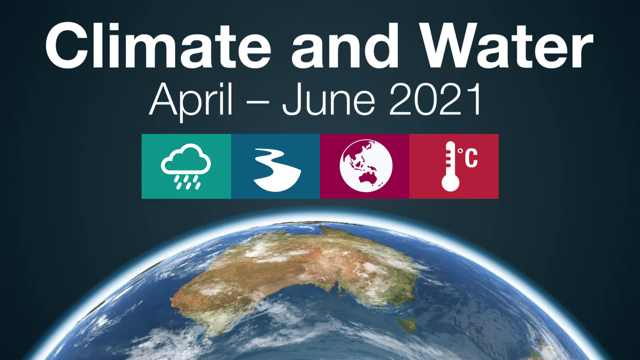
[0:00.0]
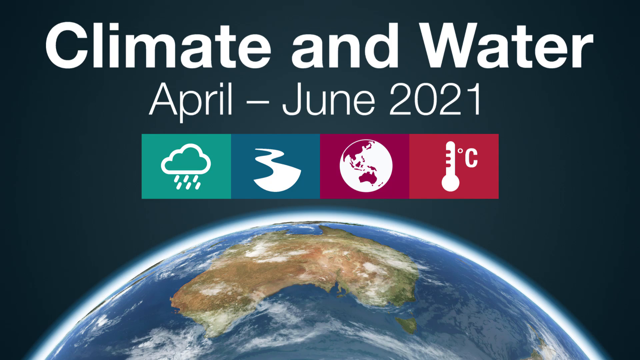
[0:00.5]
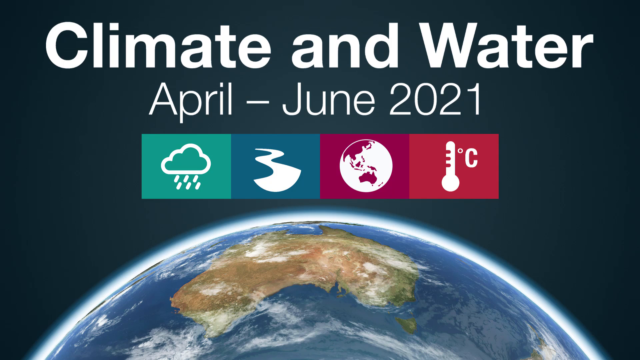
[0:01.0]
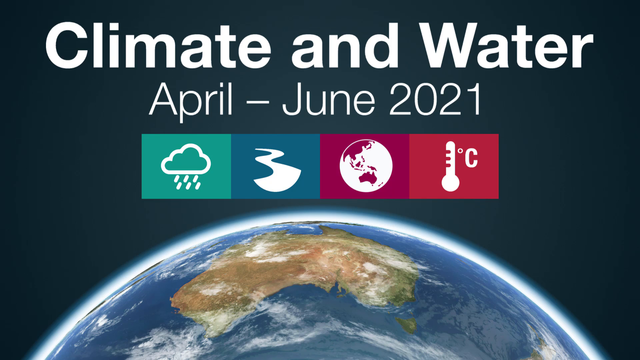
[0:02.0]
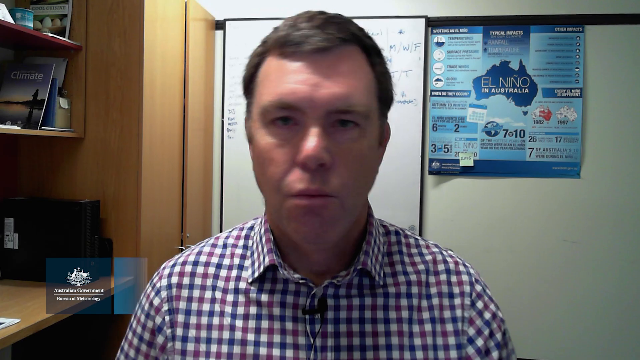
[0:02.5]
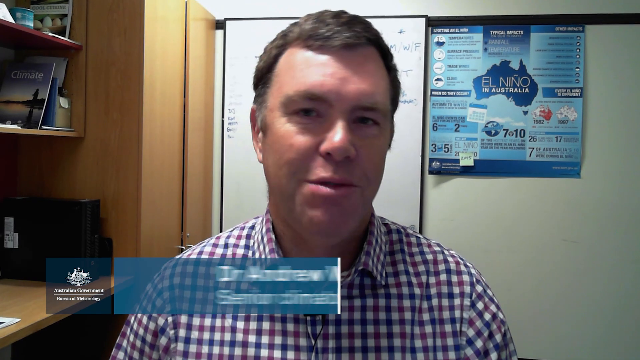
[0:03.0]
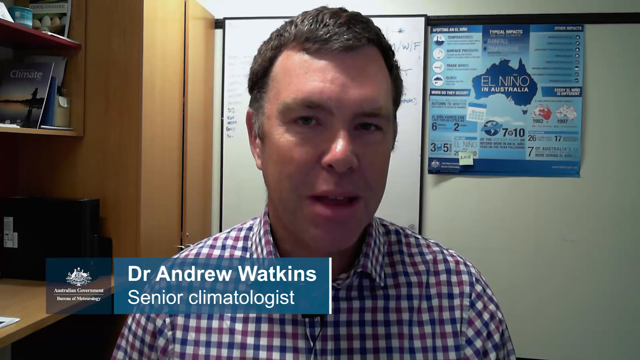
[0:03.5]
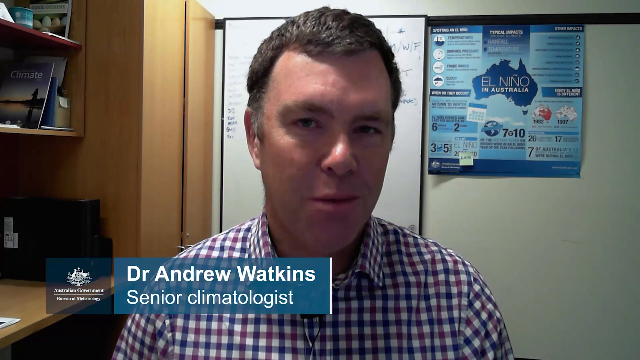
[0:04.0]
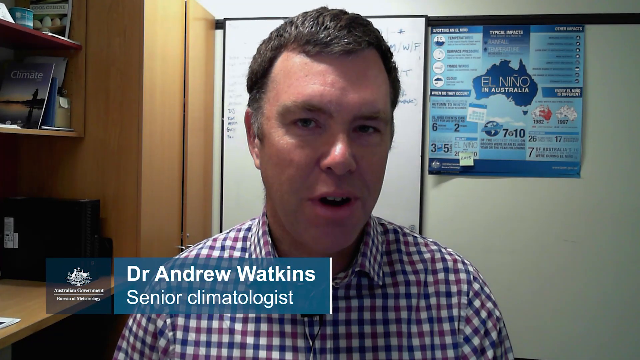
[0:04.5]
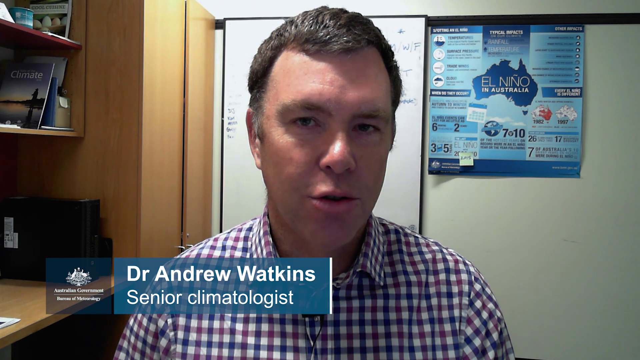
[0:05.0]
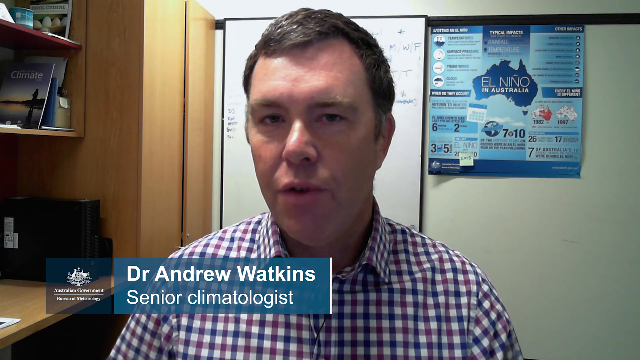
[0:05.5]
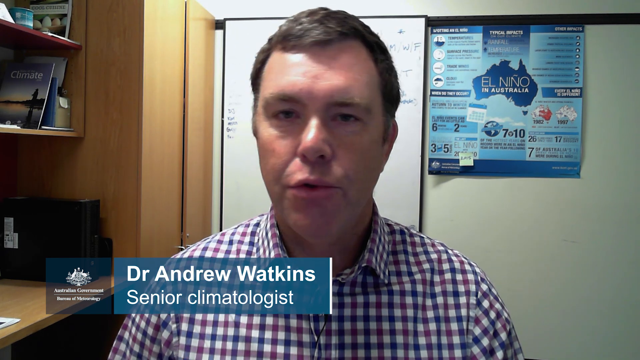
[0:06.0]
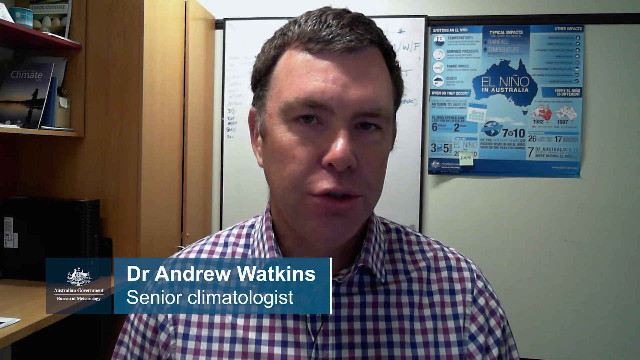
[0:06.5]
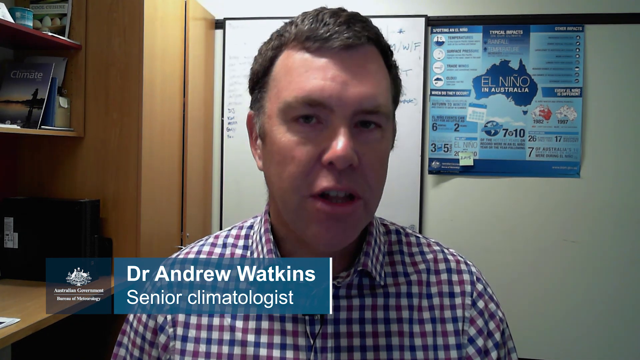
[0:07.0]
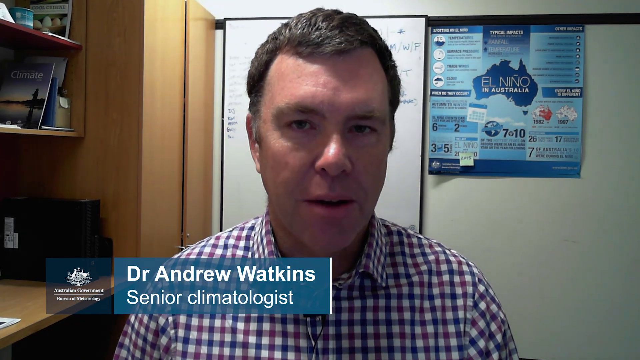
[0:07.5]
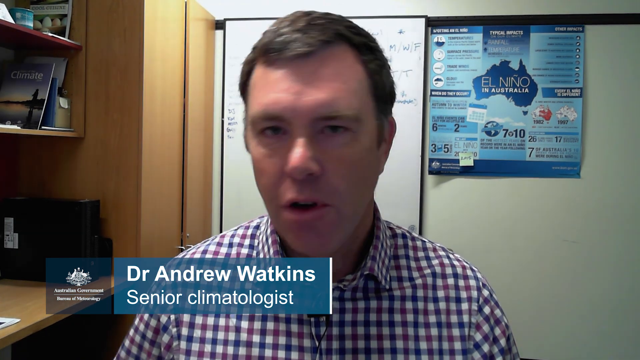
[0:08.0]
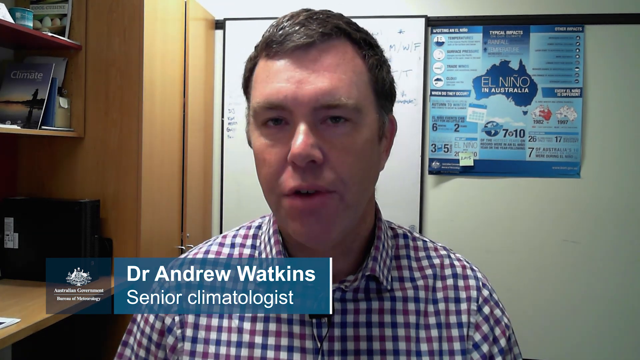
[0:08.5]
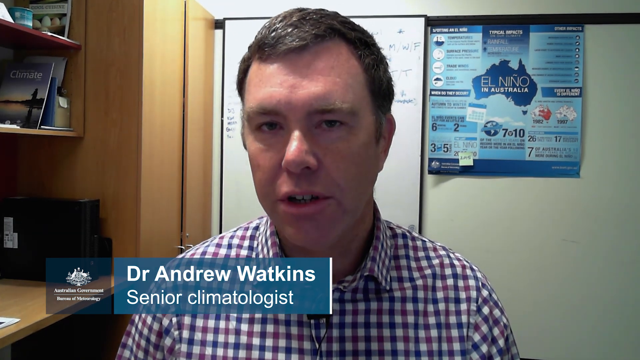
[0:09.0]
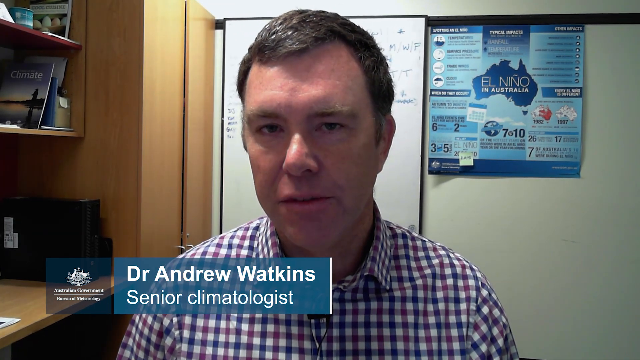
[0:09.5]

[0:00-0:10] The video opens on an image of the upper surface of the Earth from space. Directly above it is the text "Climate and water, April to June 2021", along with four small icons: a green square with a cloud and rain, a blue square with what looks like a river, a pink square showing the planet Earth, and a red square showing a thermometer. The video then changes to a man being interviewed in an office: Dr. Andrew Watkins, a senior climatologist. He speaks to the camera, wearing a checked white, blue and purple shirt, and has brownish-grey hair. Behind him is a map of what looks like Australia. The setting appears to be his office, with books and shelves visible.